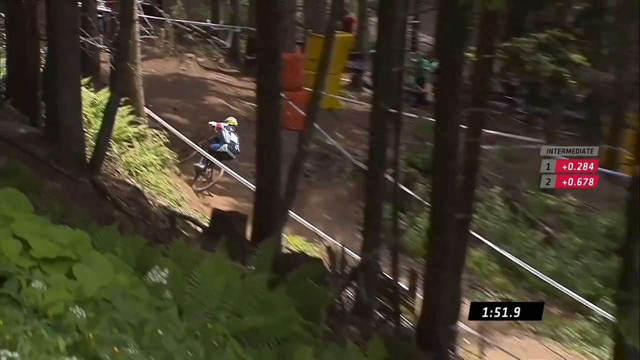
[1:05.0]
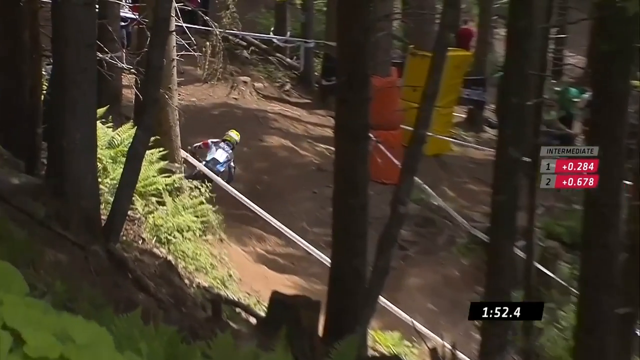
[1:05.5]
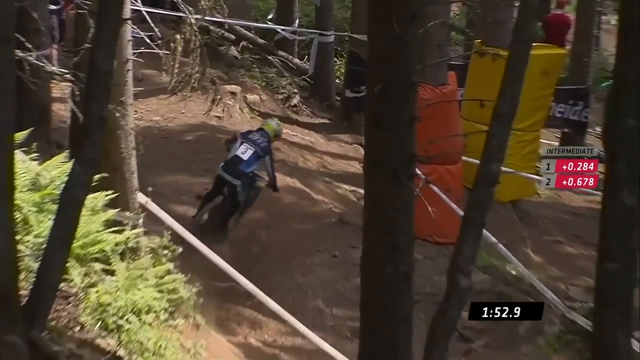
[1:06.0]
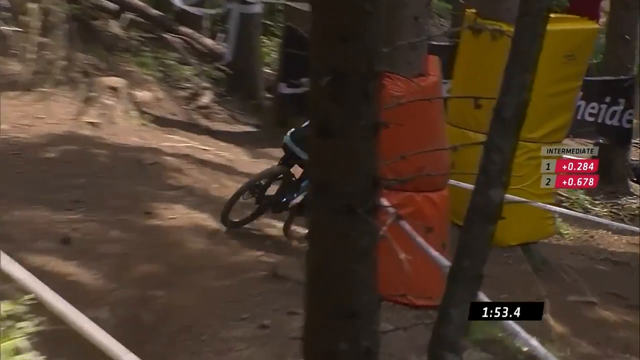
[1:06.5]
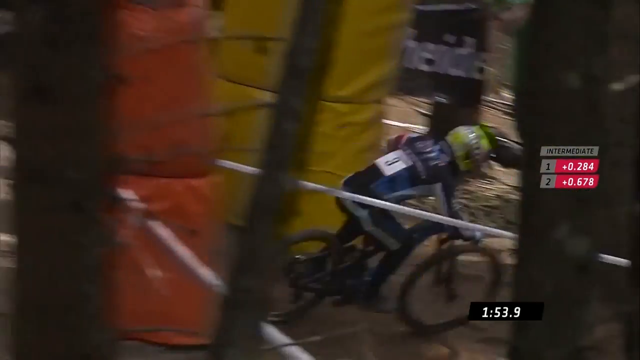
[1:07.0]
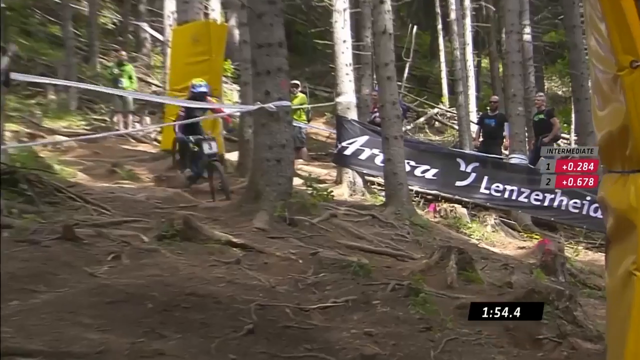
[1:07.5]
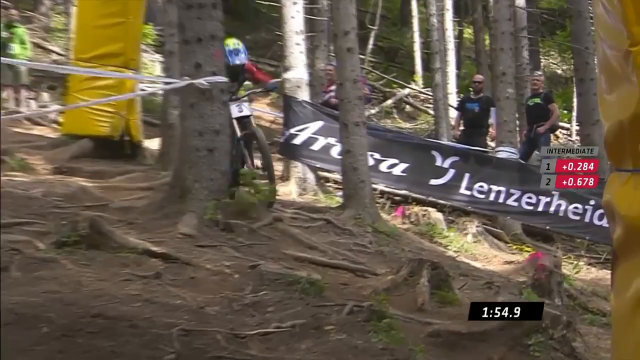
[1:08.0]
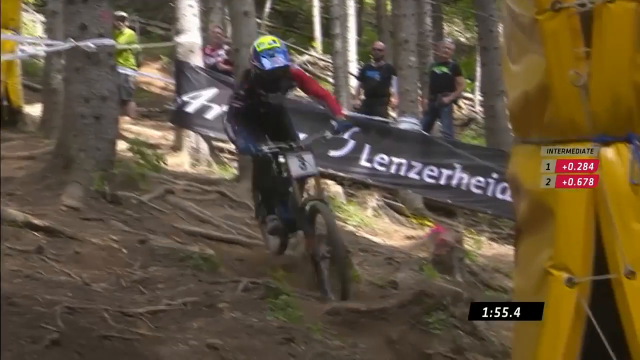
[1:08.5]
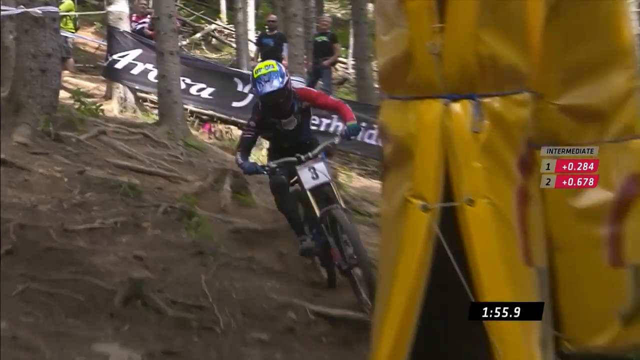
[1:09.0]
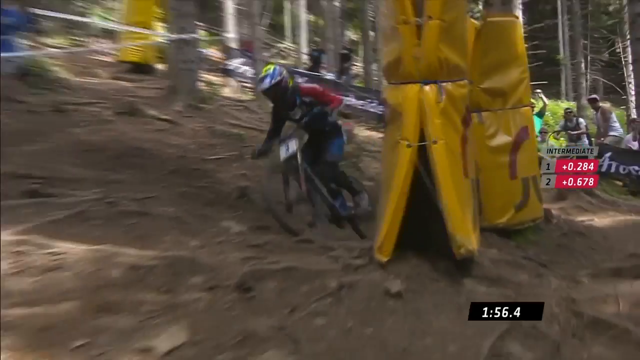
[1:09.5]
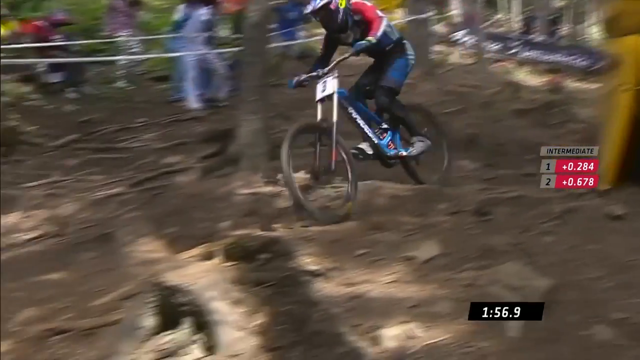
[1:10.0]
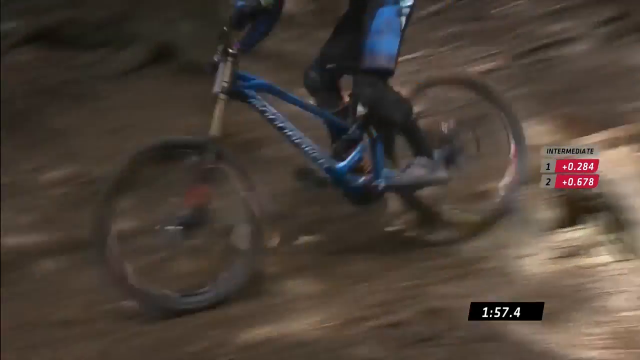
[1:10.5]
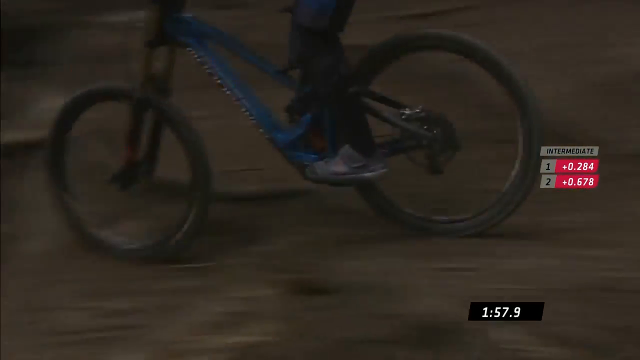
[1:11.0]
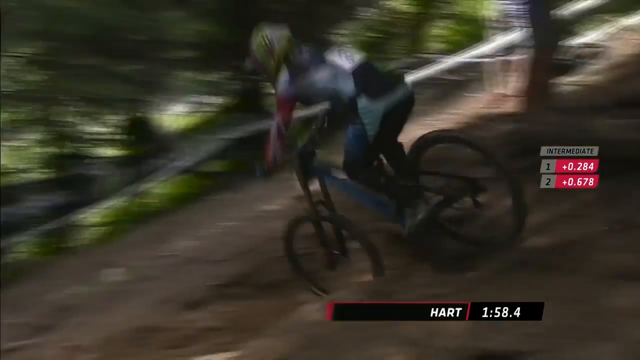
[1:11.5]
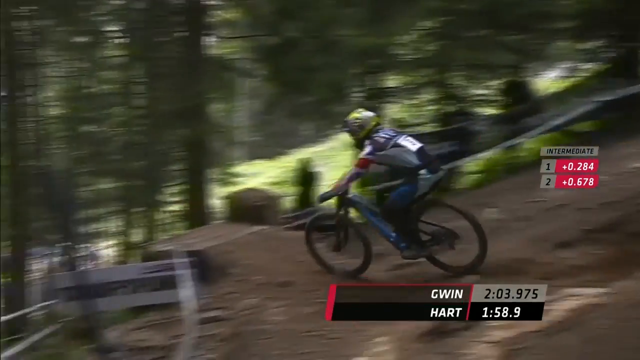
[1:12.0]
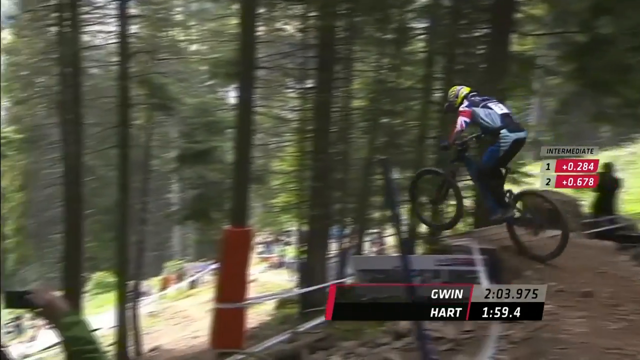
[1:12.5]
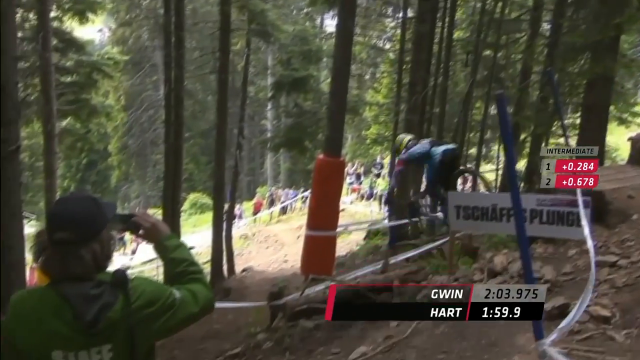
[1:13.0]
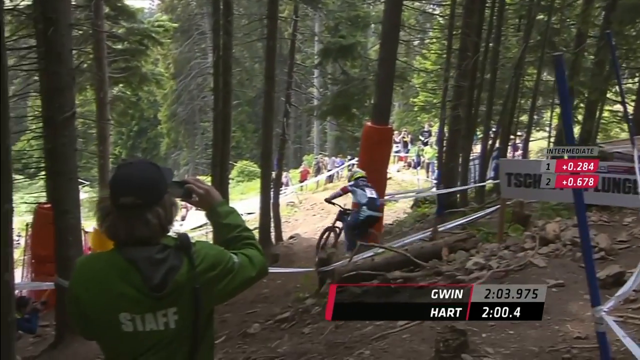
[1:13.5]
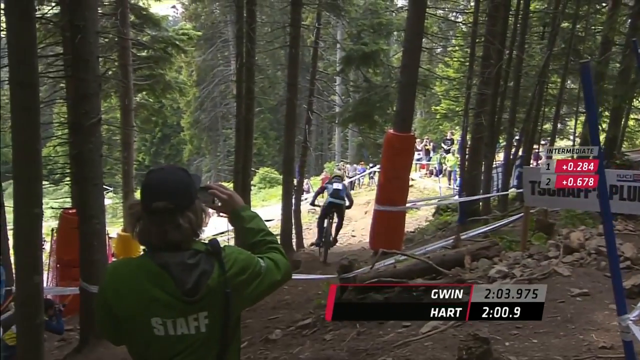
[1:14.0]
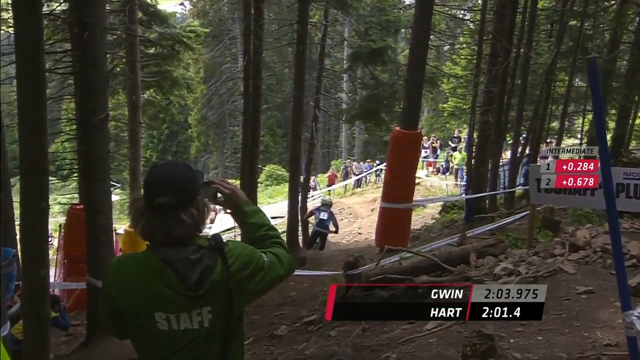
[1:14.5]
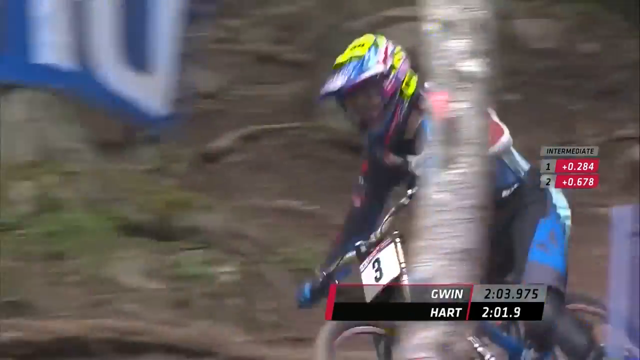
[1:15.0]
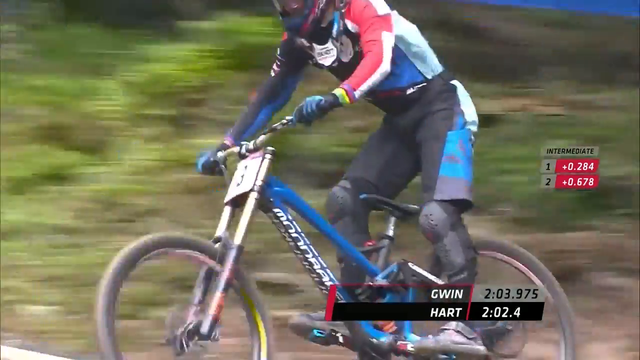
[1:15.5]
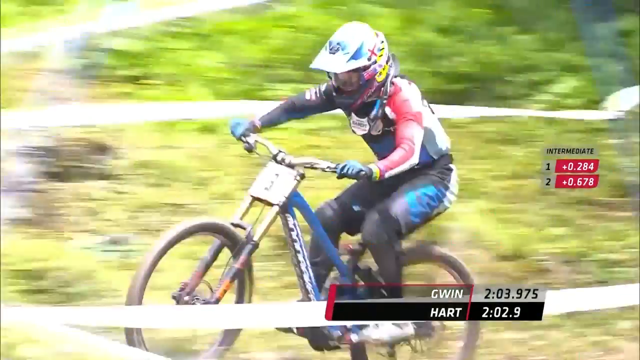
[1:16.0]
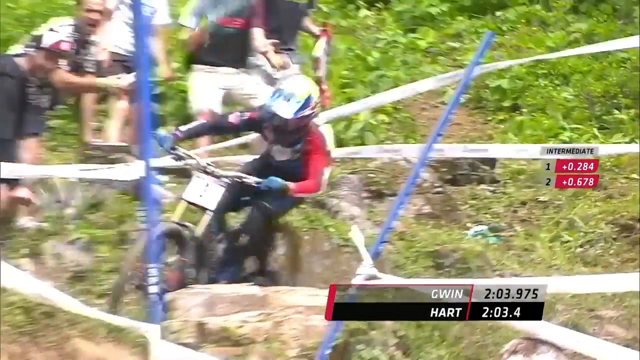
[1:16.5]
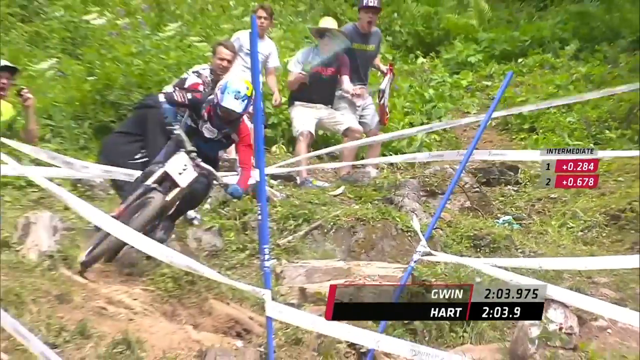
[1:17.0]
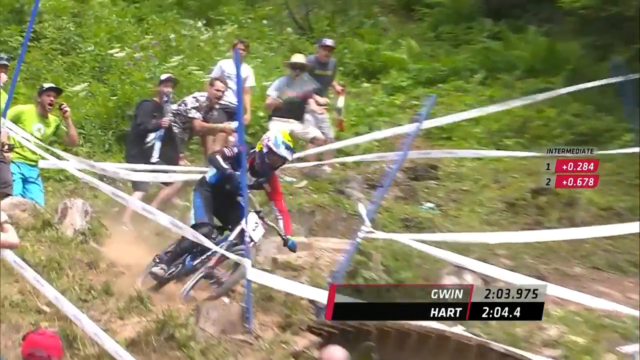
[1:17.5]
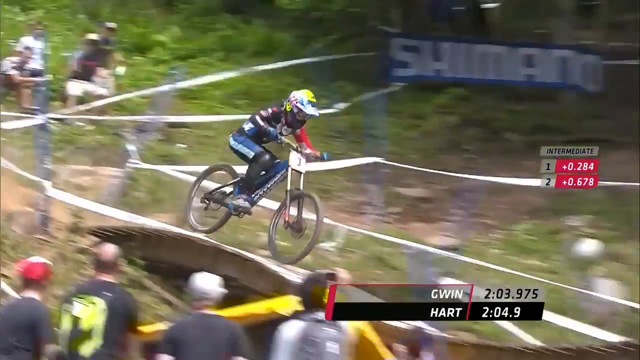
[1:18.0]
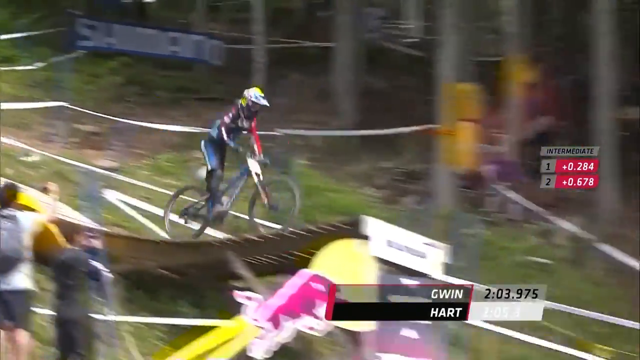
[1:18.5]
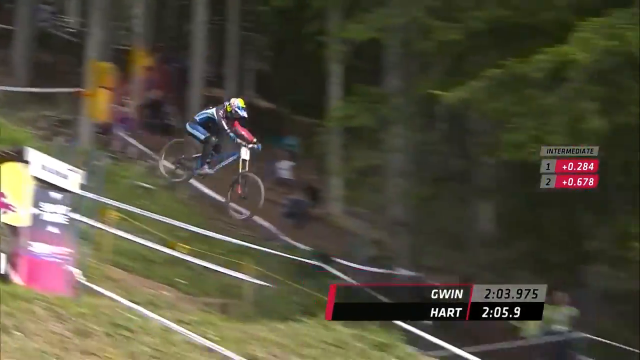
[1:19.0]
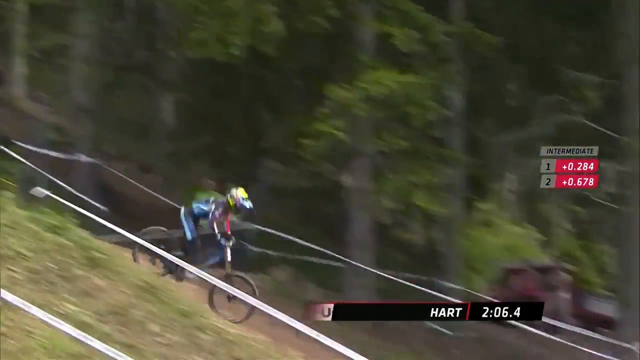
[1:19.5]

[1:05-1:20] Hart continues down the hill, navigating some very tight turns. He is back in the tree line, where the path is quite narrow, and he weaves through trees padded with yellow or red pads. White ribbon flanks the dirt path to show him where to go, and right outside it many more people cheer him on and take pictures. Among the trees he goes over many raised roots, then crosses a narrow wooden bridge that sends him shooting over a cliff. He lands safely and keeps dropping down.